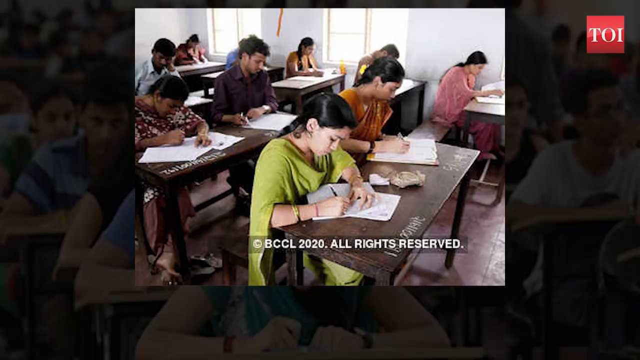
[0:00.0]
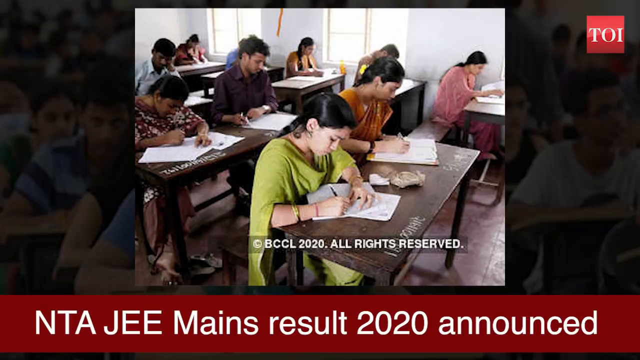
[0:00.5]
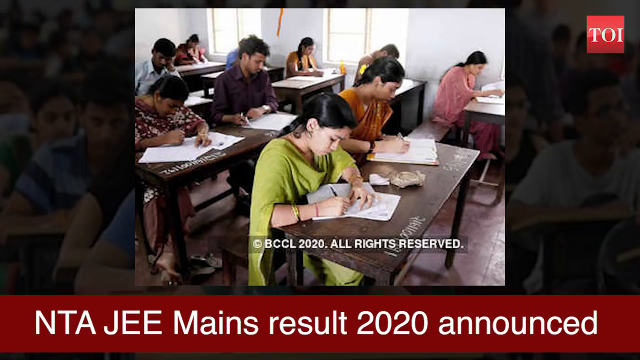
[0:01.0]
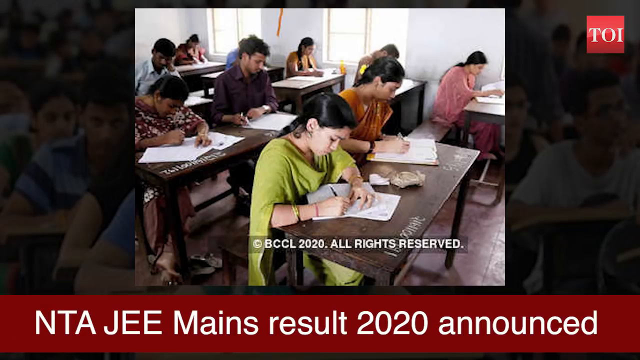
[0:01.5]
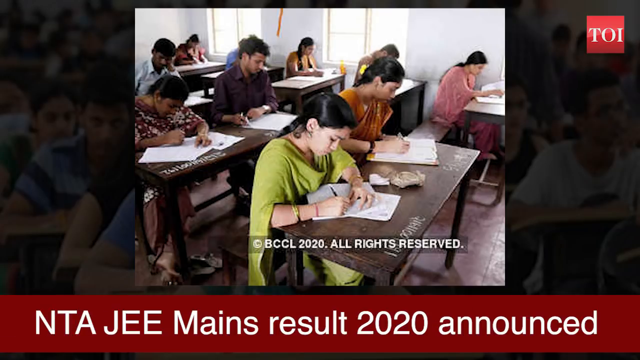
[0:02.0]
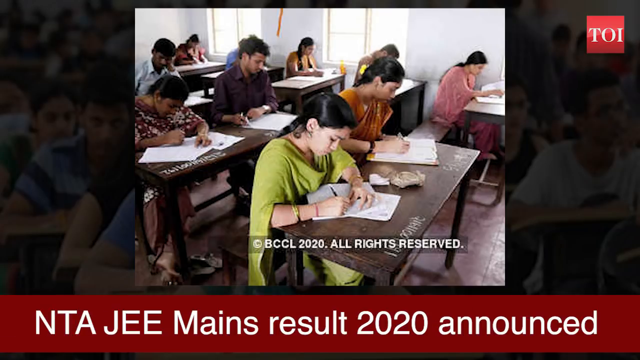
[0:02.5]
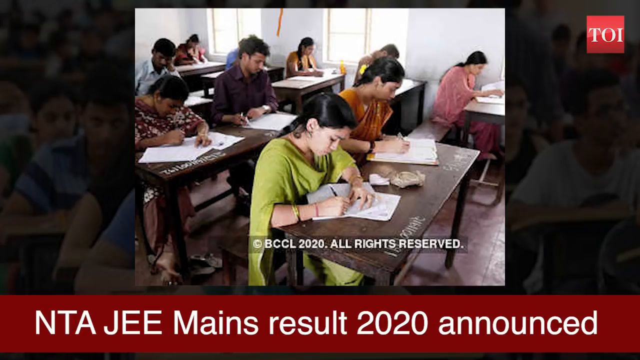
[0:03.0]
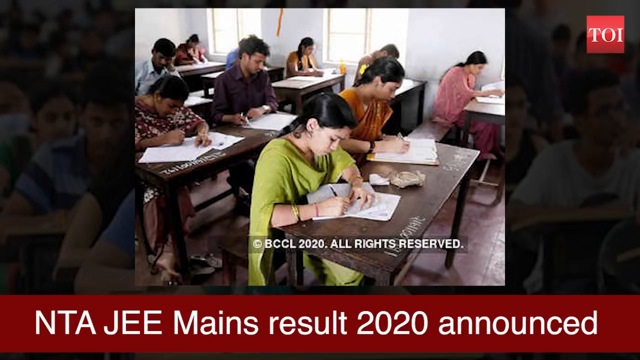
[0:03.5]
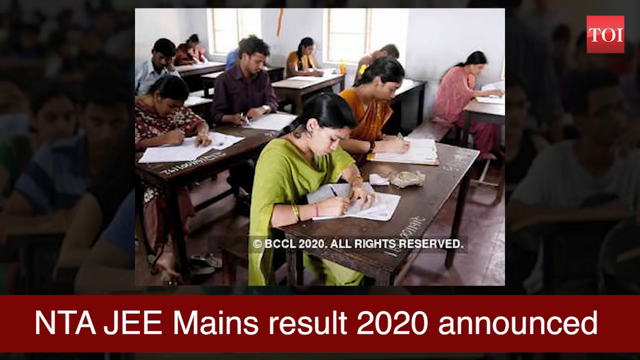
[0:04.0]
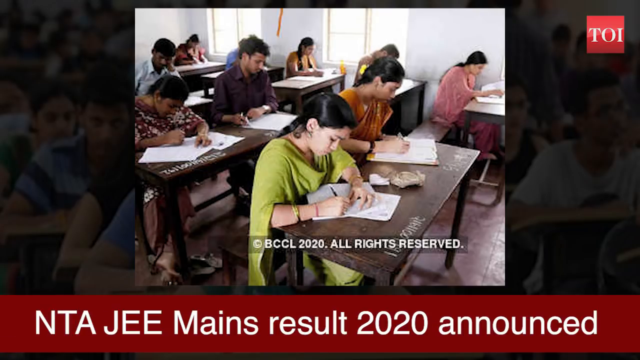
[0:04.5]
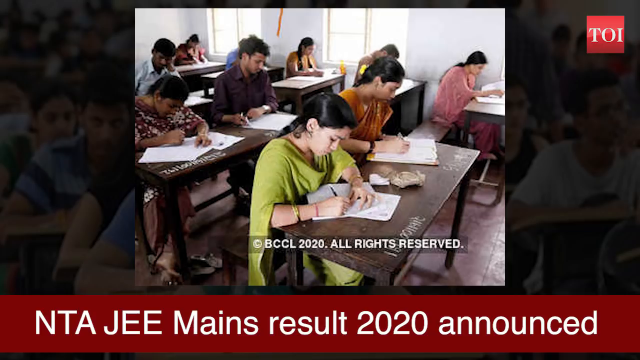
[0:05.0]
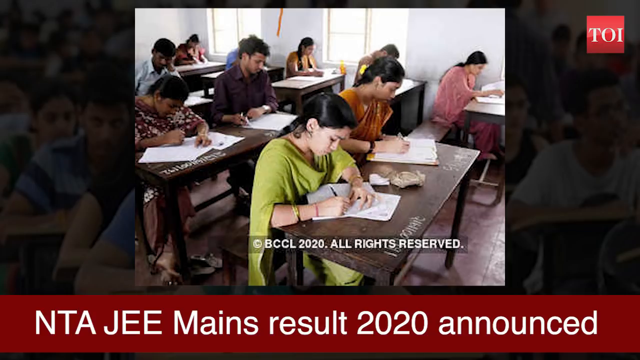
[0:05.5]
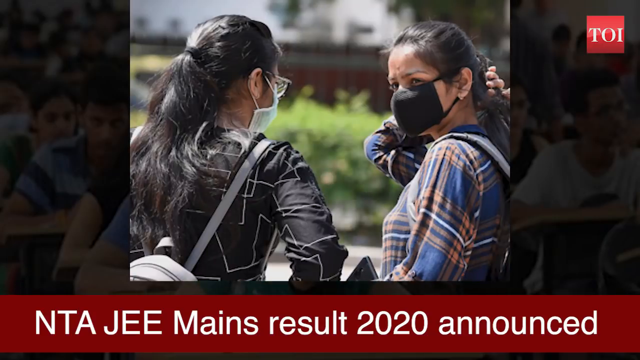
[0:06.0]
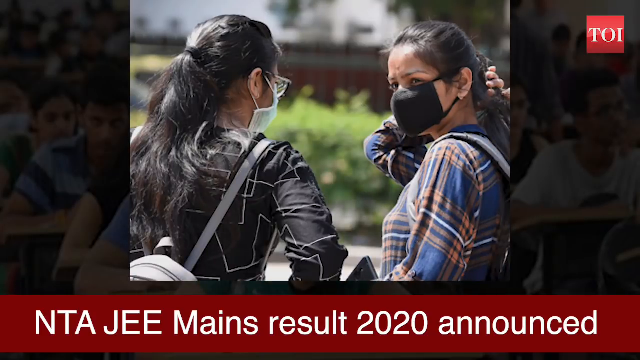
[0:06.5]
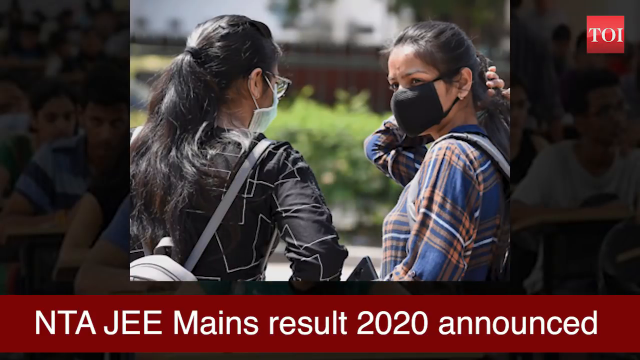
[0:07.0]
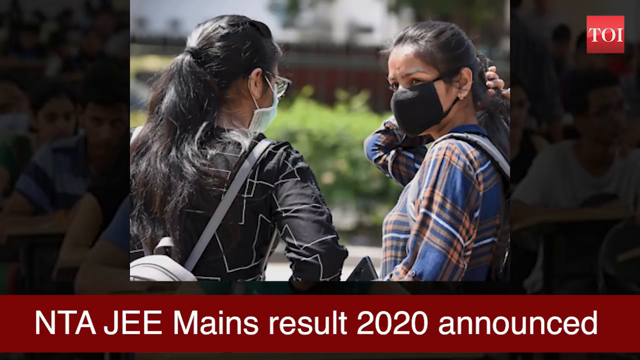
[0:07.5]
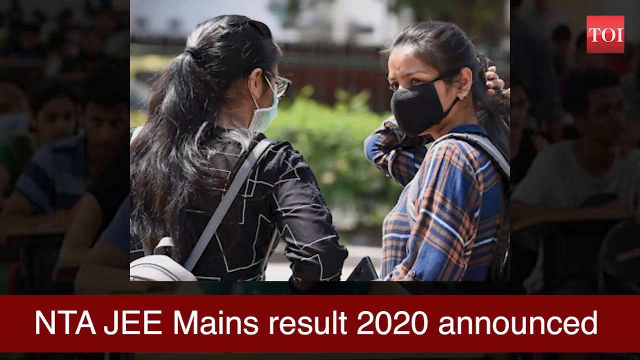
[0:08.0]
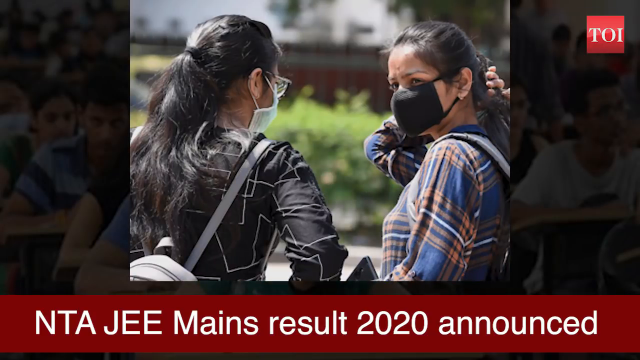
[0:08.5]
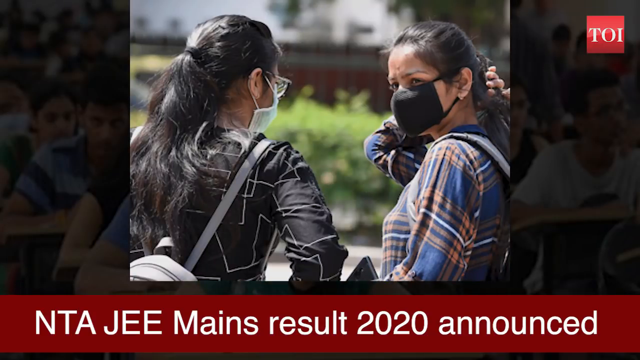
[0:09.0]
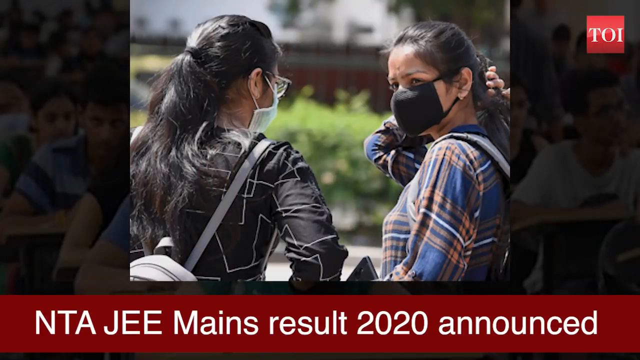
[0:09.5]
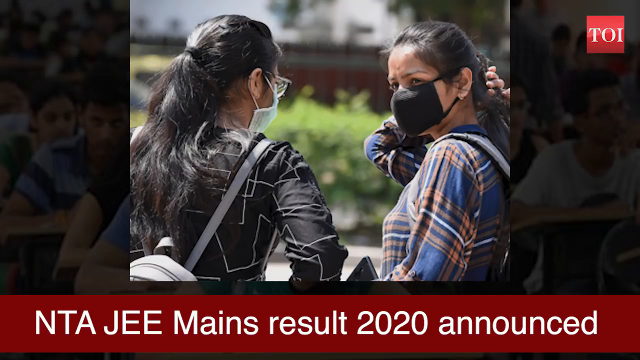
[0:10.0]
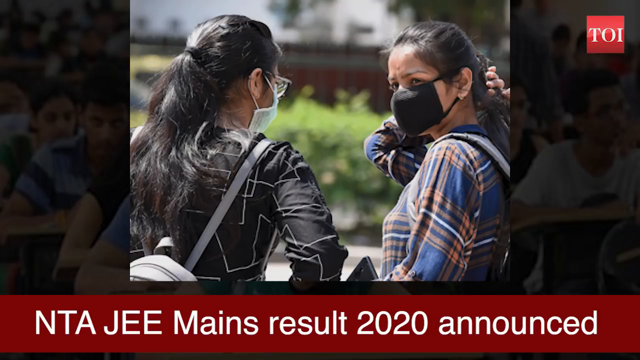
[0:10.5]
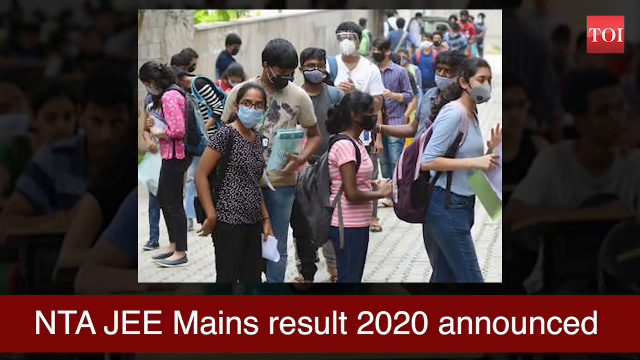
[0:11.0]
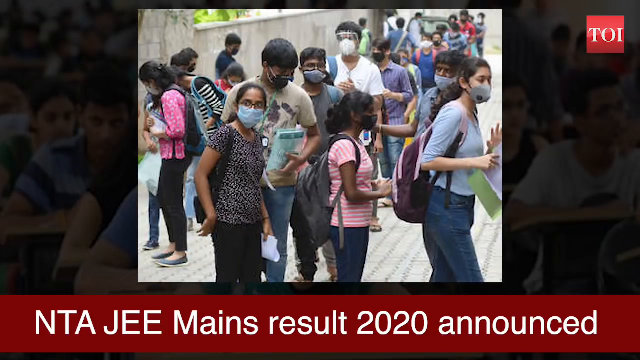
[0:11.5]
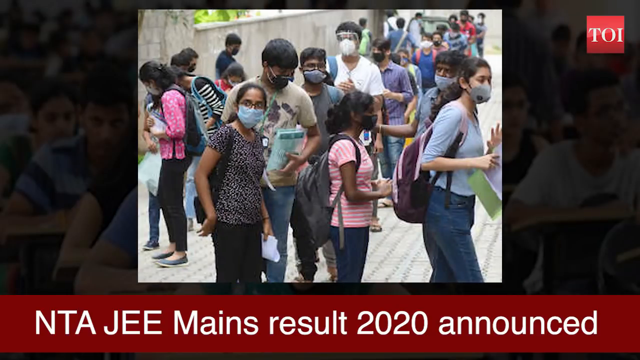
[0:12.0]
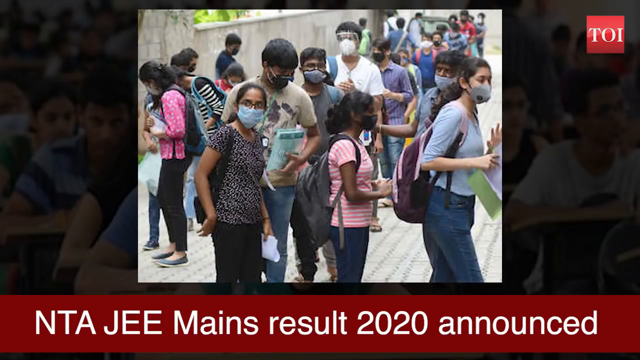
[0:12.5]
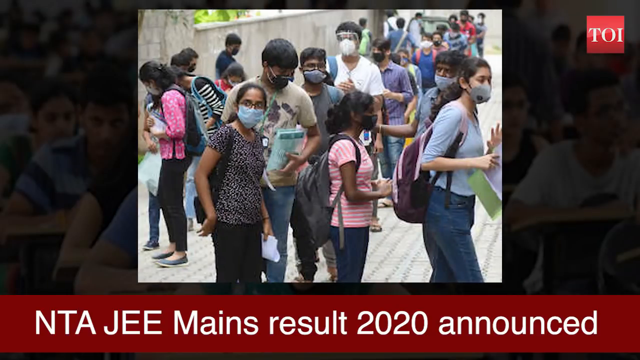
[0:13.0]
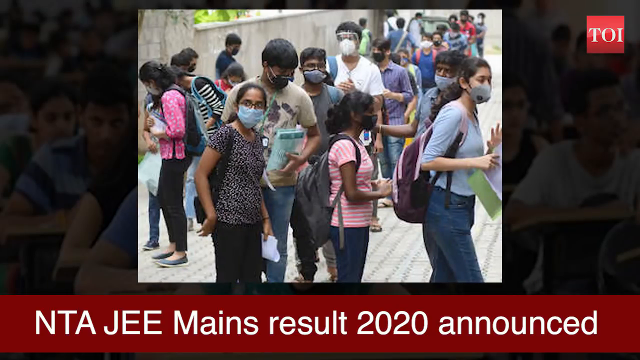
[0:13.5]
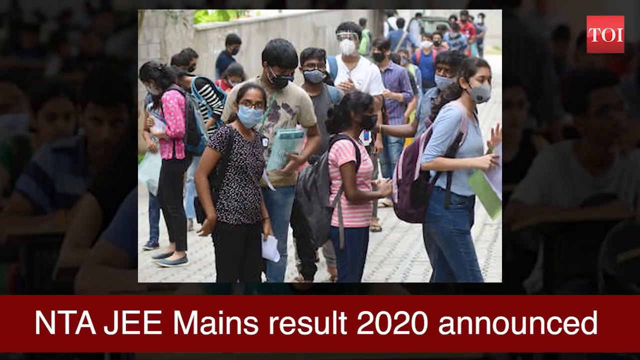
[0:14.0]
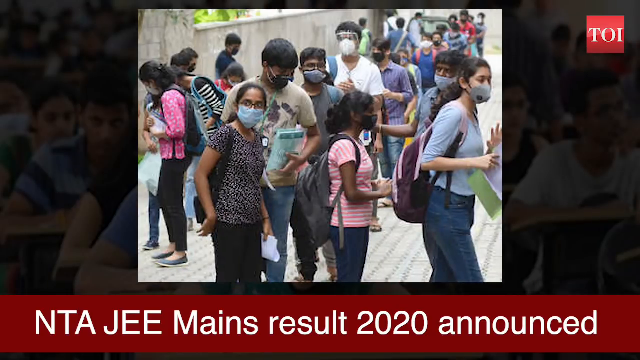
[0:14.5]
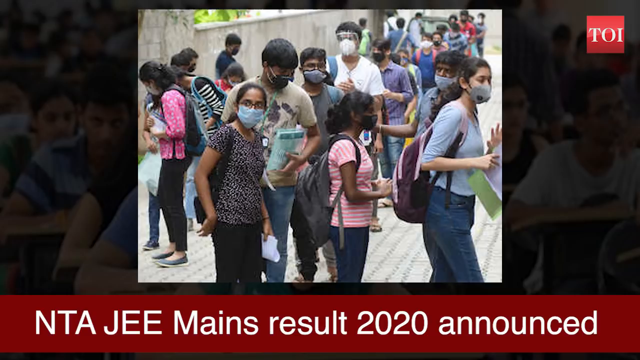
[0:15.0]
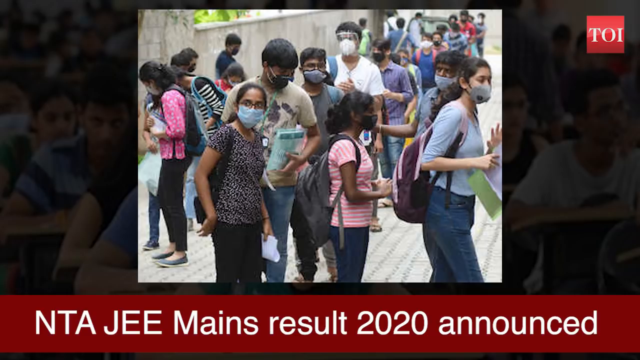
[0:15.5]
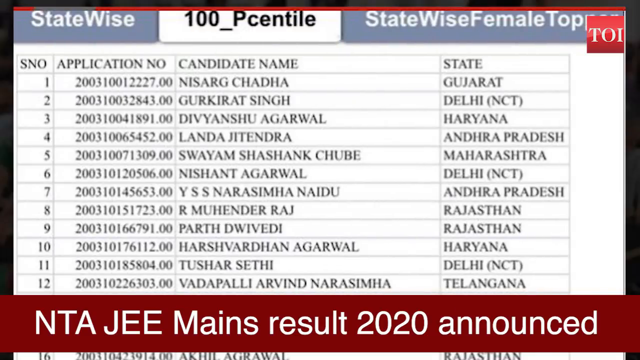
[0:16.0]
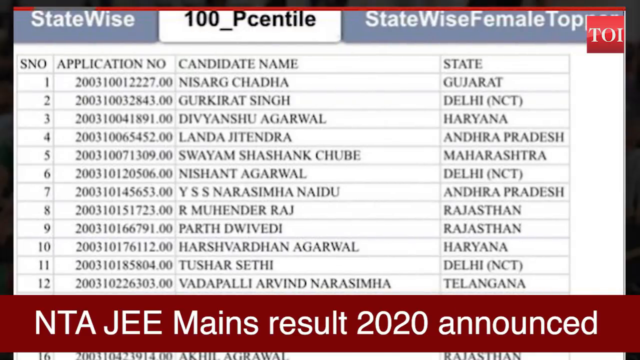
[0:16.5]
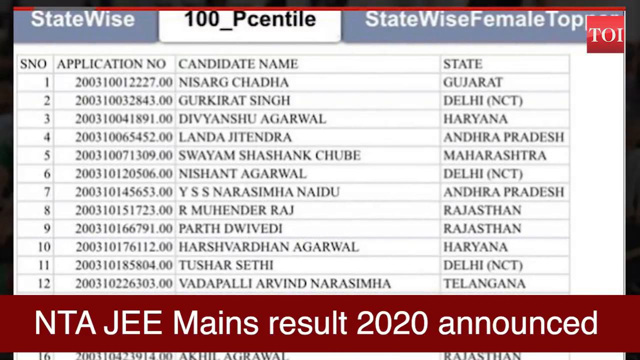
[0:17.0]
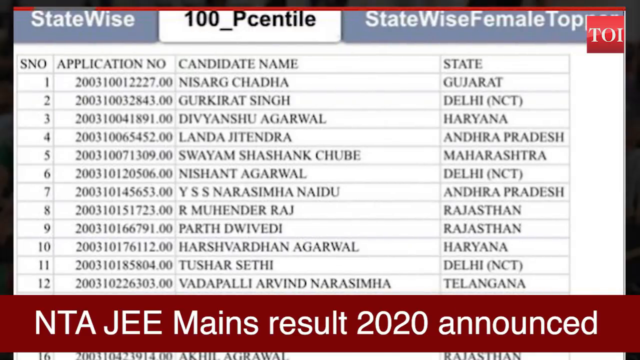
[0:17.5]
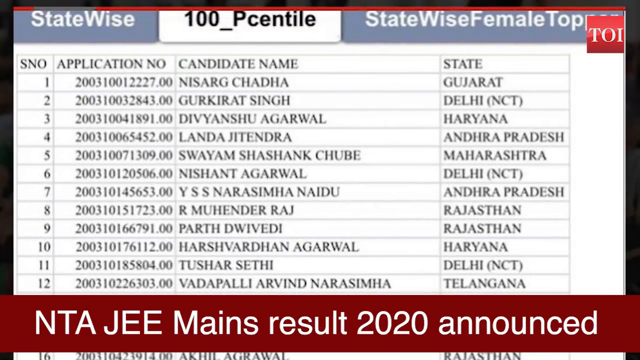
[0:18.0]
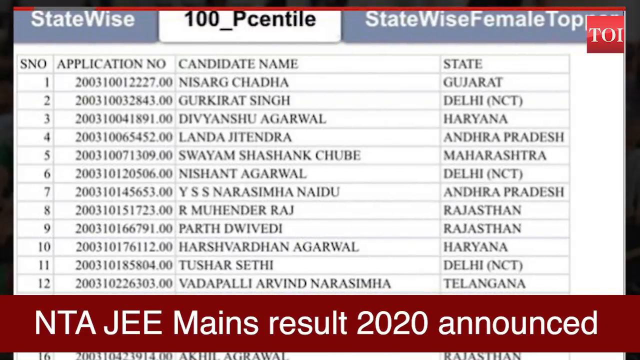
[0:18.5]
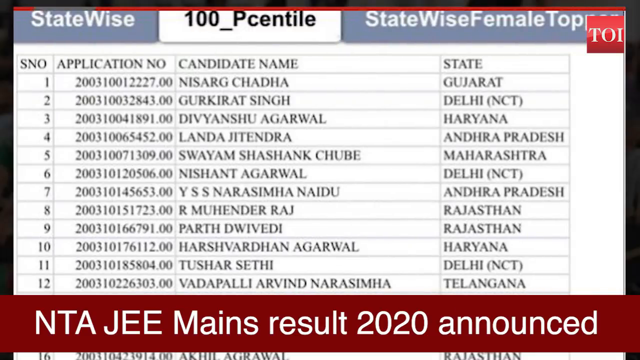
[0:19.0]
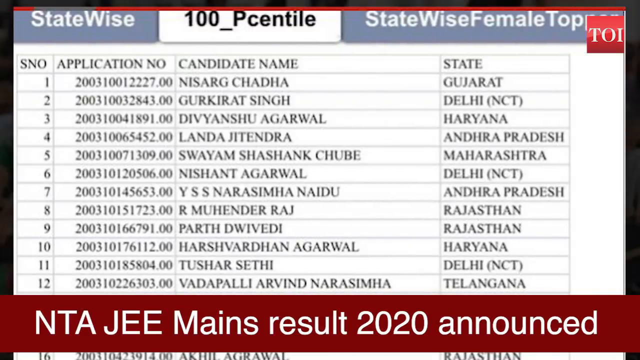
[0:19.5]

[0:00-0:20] Tables in a classroom setting appear. In the front, three tables are visible, each seating two individuals; in the back are four tables, each seating one individual. All of the people are writing, facing down intently at the paper in front of them. All of the individuals appear to be of Indian or Eastern European descent. A caption at the bottom of the screen reads "NIAJEE Mains result 2020 announced". The scene shifts to two ladies who appear to be of Indian or Eastern European descent. The lady on the right wears blue and orange and has her right hand behind her head, grasping her long dark hair; she wears a black protective face mask. To the left is a lady in a black shirt with a backpack, her long dark hair pulled back in a ponytail, wearing a white protective face mask. The scene then shifts to a large group of student-age individuals on a sidewalk, all wearing protective face masks.